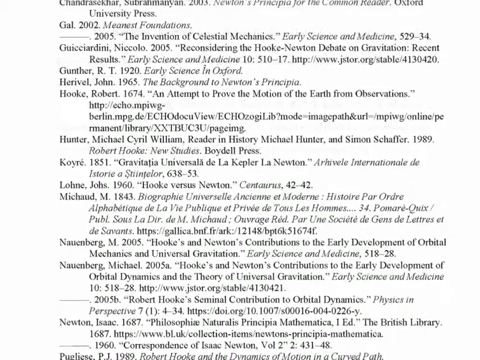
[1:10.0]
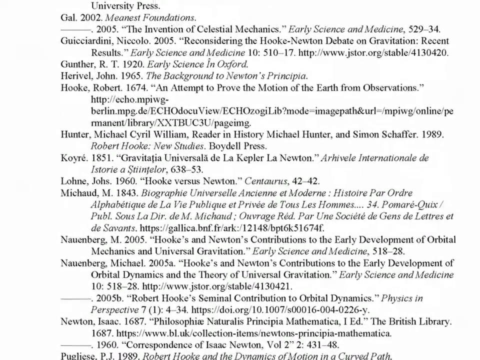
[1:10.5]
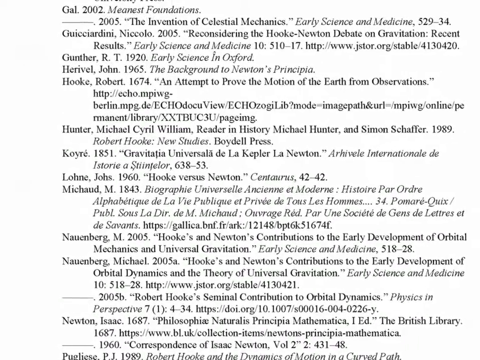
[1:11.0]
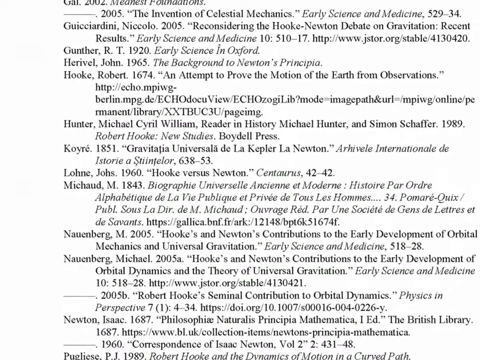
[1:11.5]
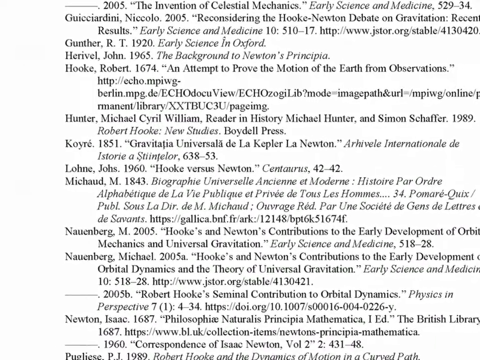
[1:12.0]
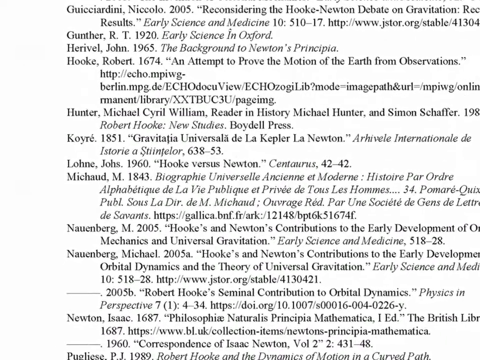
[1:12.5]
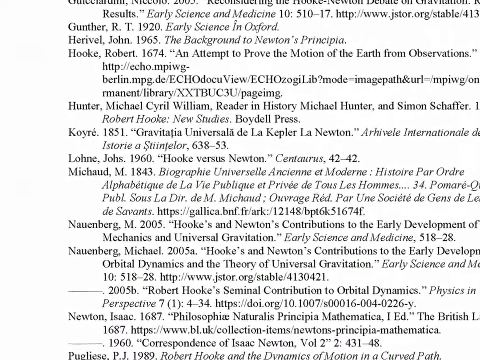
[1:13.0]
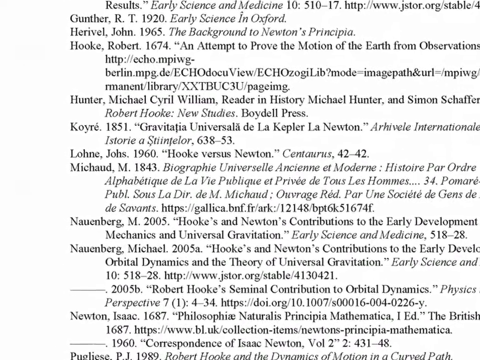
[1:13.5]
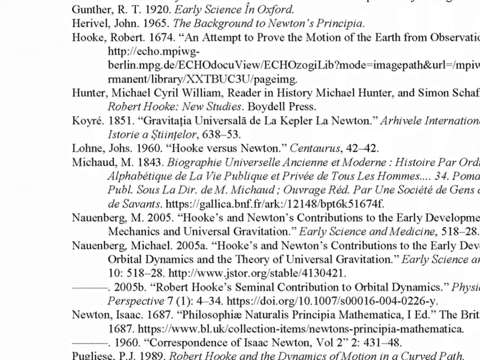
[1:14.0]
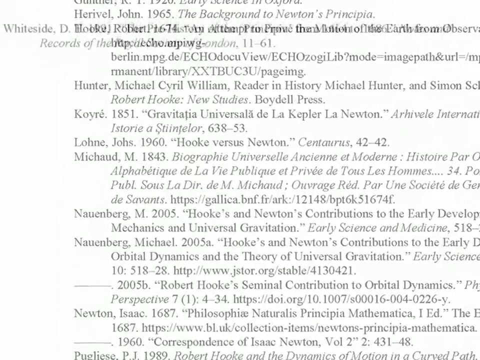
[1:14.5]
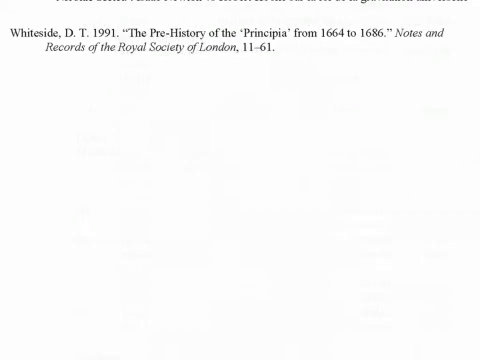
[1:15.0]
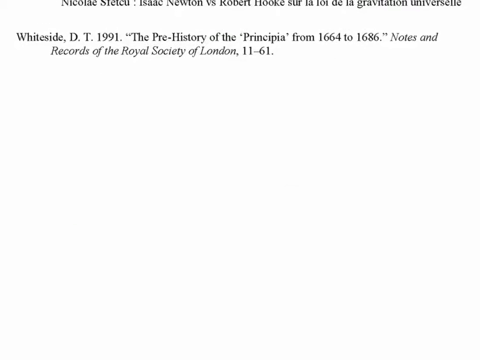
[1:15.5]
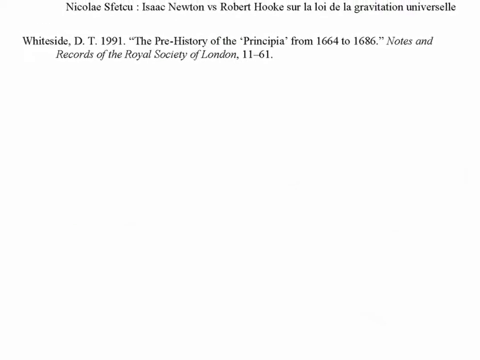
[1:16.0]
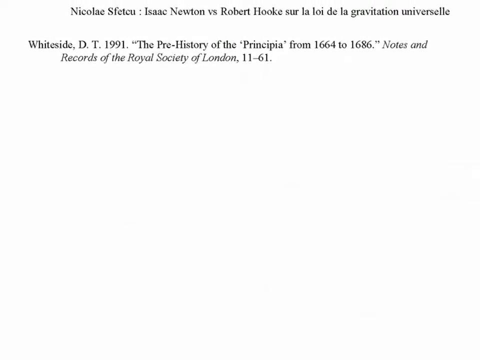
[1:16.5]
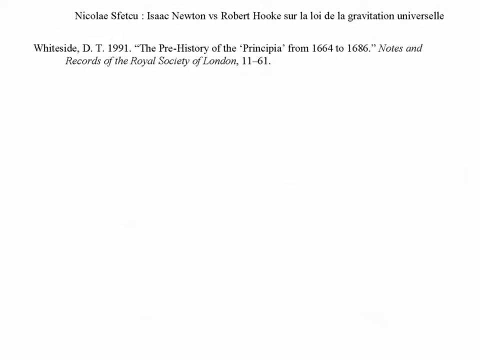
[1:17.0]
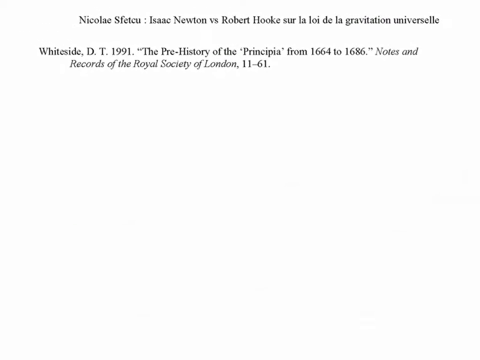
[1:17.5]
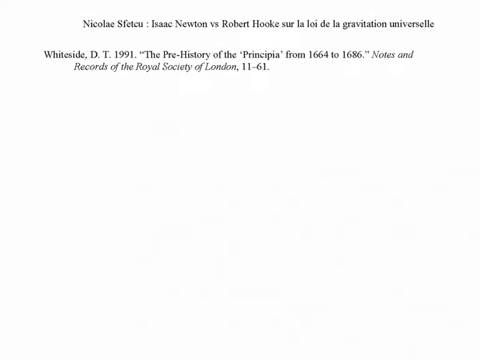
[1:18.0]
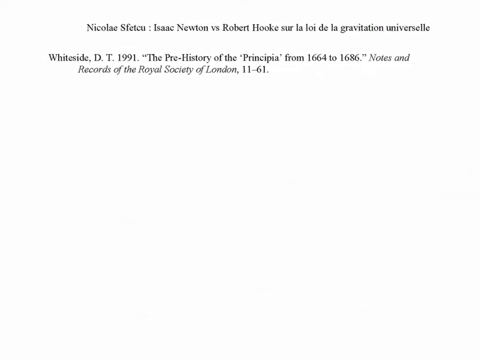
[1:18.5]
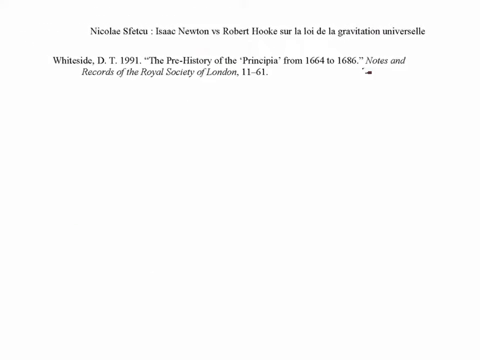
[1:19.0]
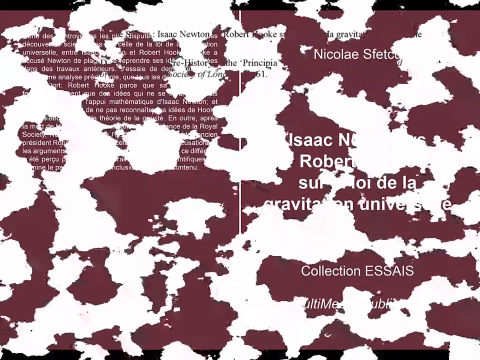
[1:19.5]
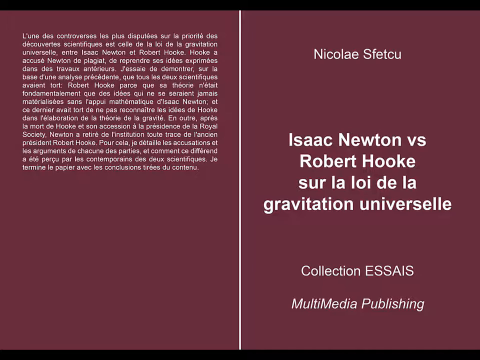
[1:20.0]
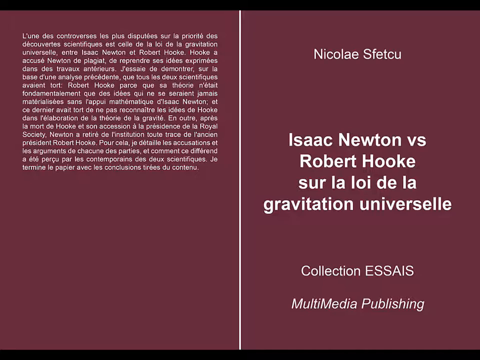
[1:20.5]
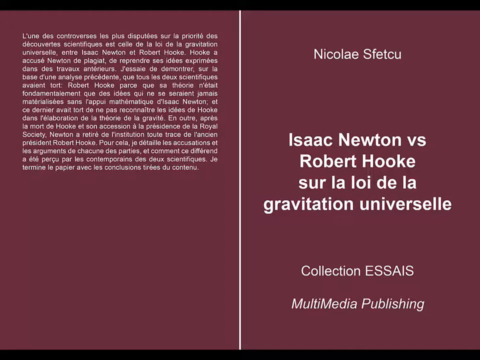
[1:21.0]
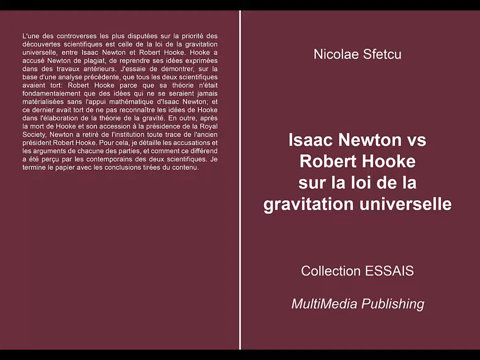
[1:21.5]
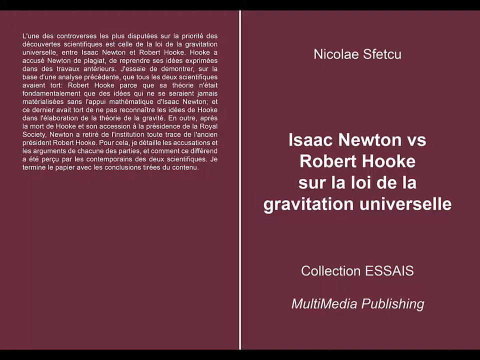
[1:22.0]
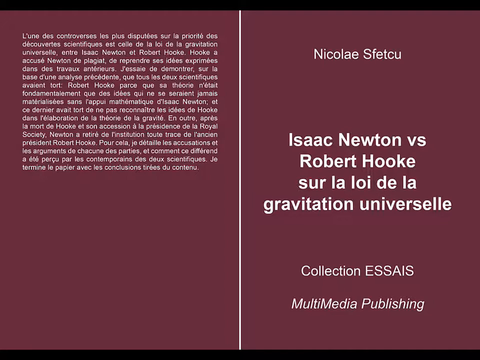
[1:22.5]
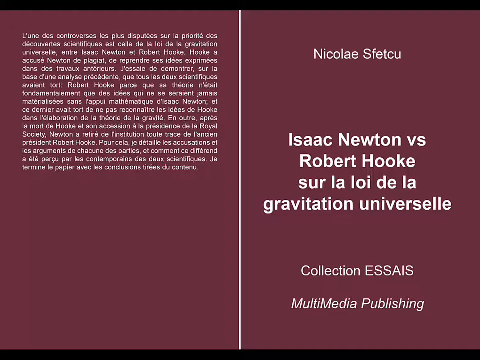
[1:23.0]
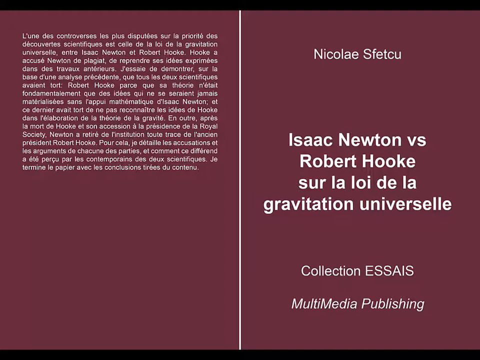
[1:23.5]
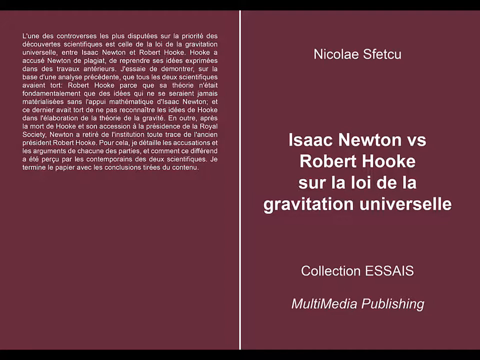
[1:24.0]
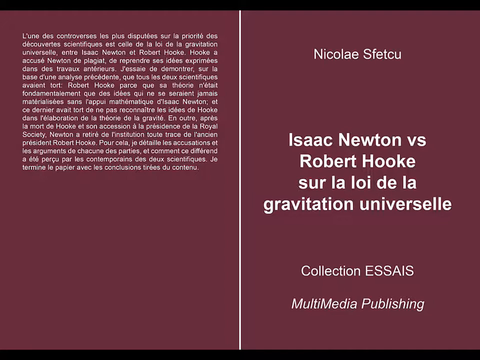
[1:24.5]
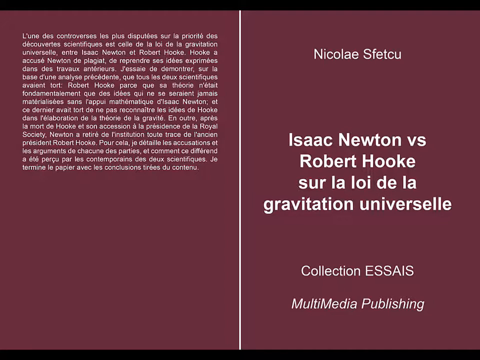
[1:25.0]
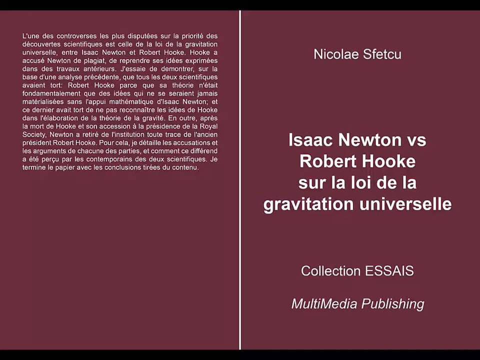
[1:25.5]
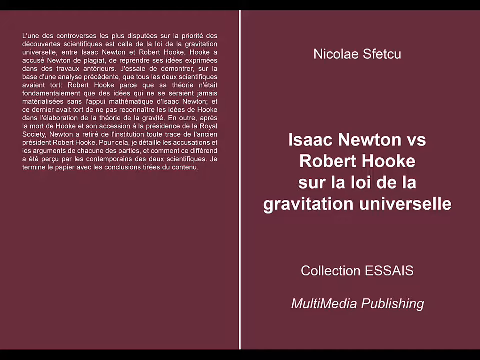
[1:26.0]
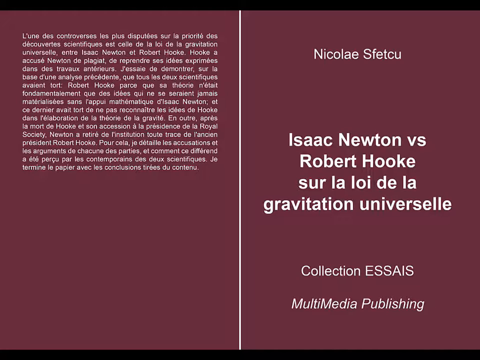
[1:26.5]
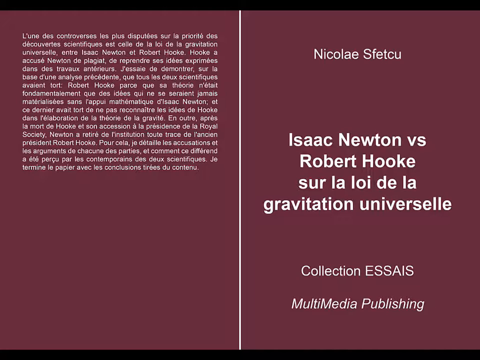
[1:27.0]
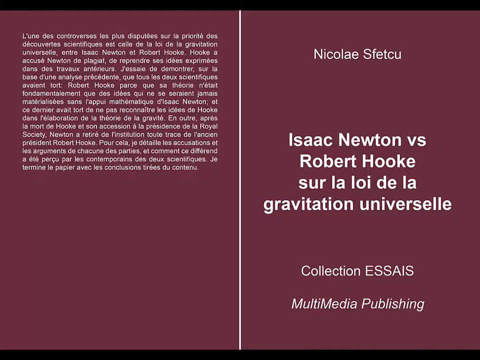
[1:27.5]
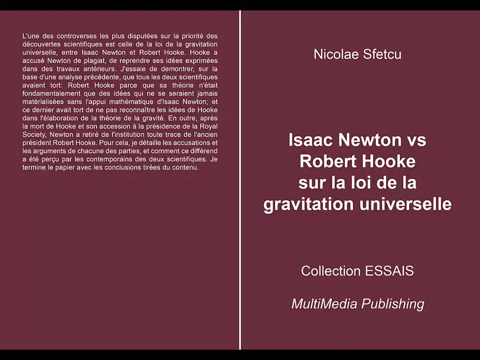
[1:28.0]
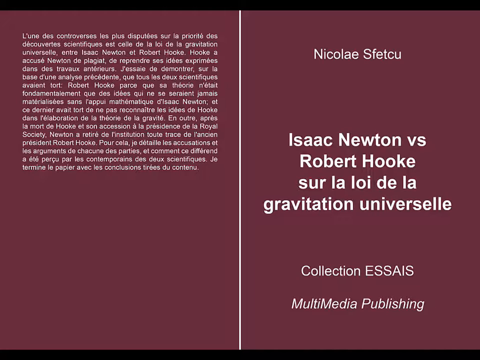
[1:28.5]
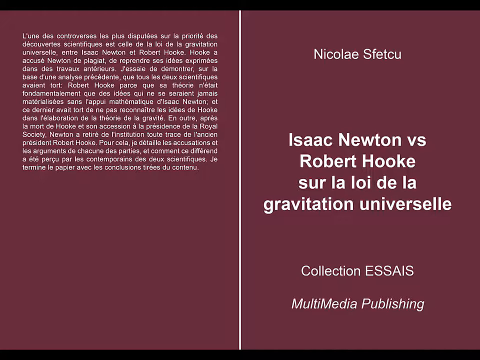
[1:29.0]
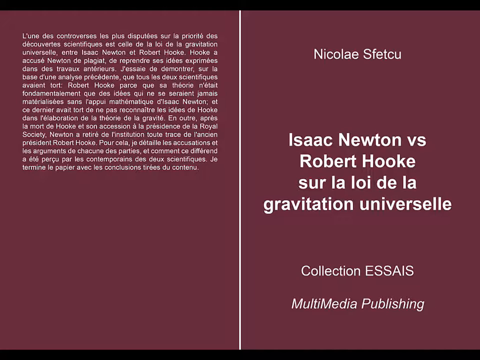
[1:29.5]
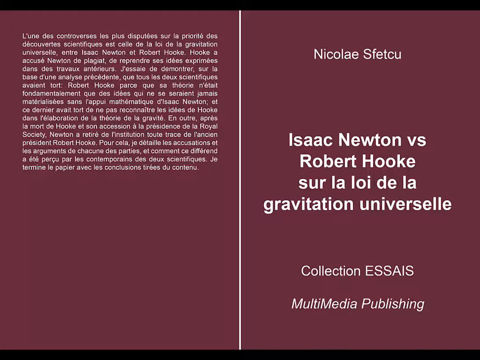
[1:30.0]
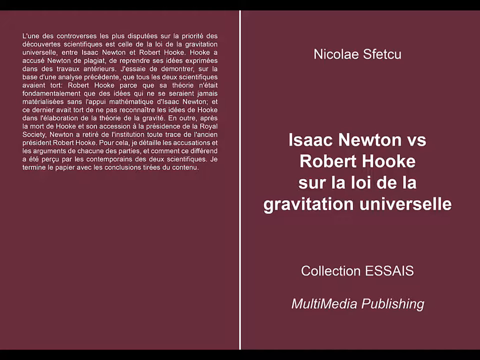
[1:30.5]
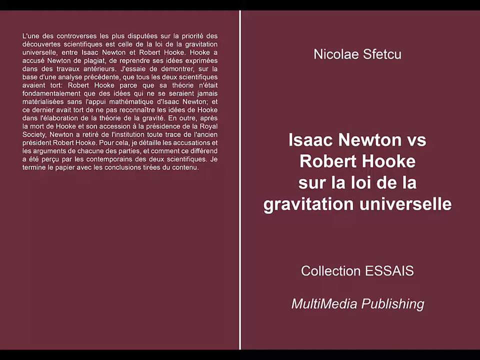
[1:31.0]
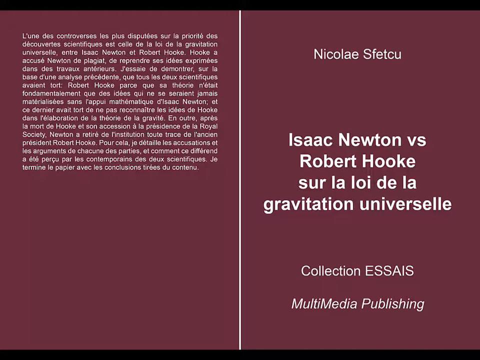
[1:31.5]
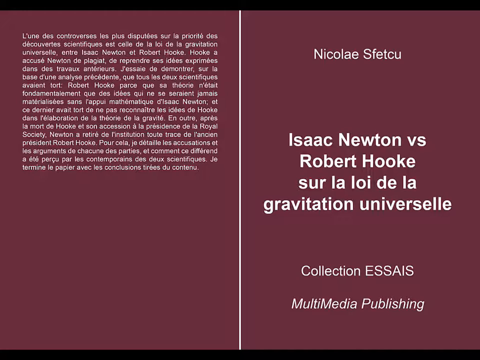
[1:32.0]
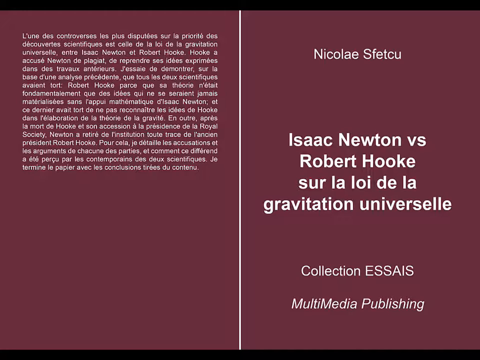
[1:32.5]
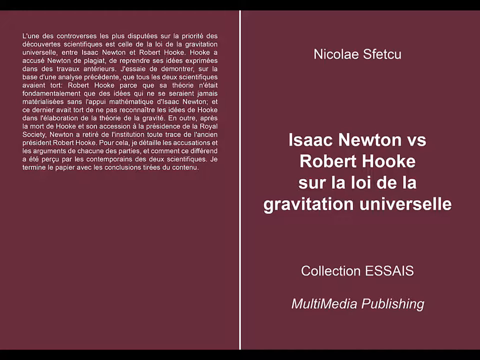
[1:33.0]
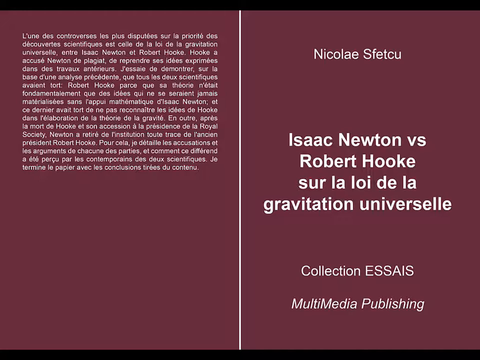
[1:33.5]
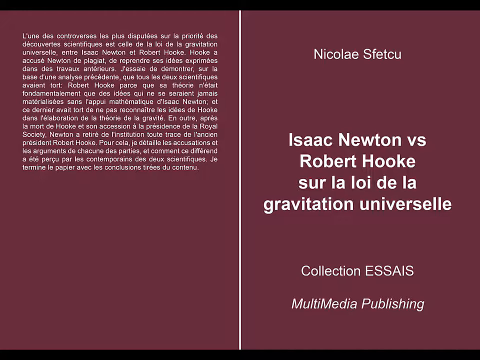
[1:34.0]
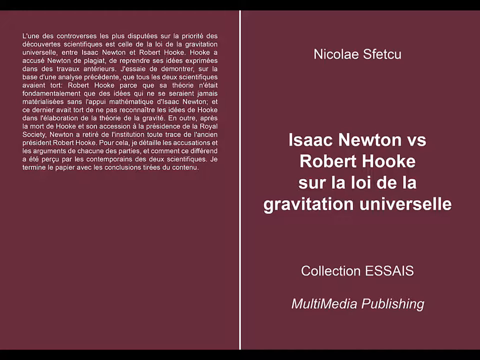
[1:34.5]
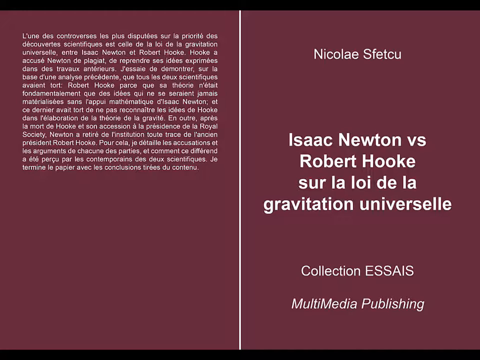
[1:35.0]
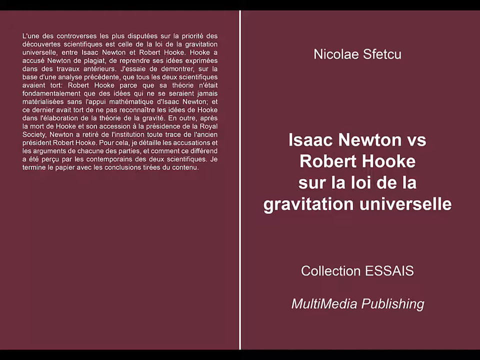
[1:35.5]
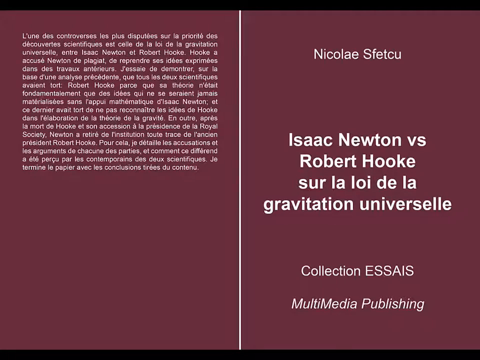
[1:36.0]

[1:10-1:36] The video cuts through different parts of the document, then moves out to what appears to be the last page, which reads "Isaac Newton versus Robert Hooke" along with "gravitation universal," a collection marked with the letters C S E S S A, and a credit to multimedia publishing, like a footnote of a document or possibly a book. The pages appear to be from documents, possibly an older book, and the camera goes through them, showing specific parts.